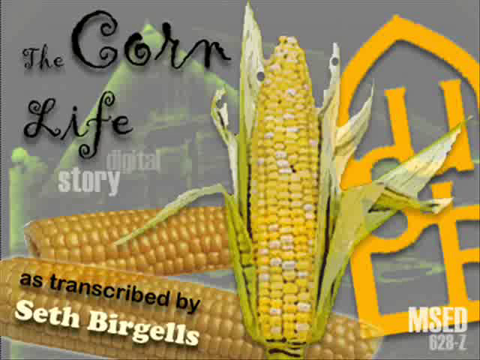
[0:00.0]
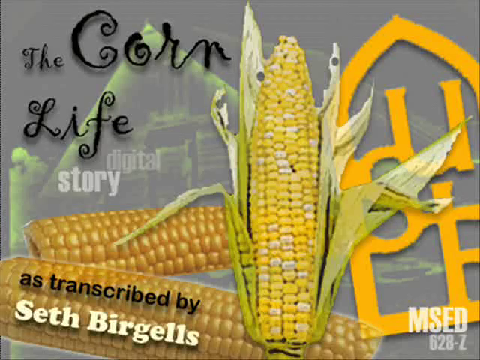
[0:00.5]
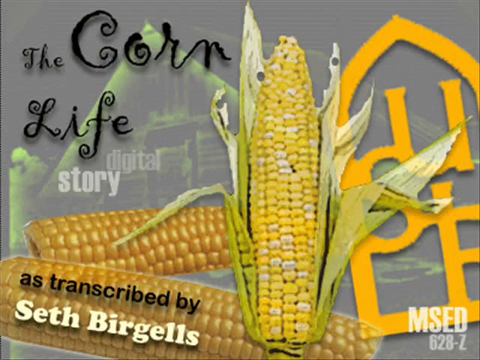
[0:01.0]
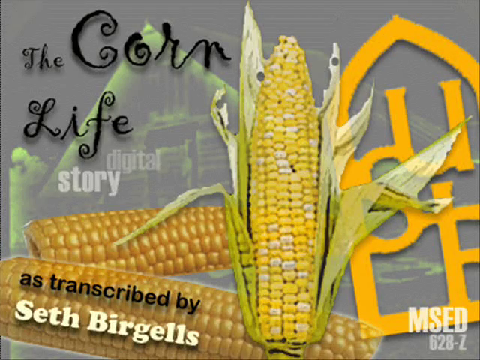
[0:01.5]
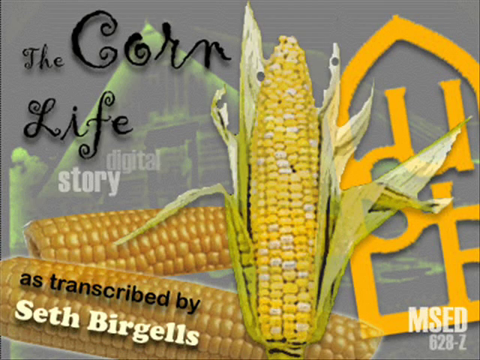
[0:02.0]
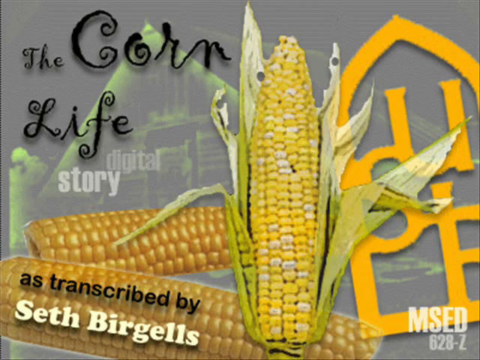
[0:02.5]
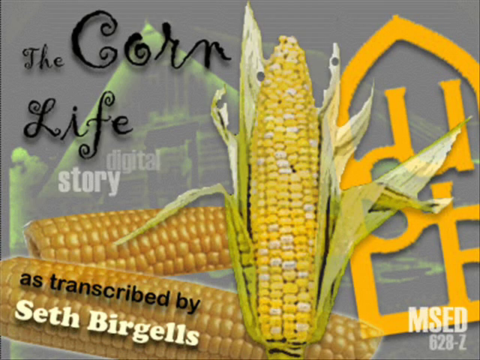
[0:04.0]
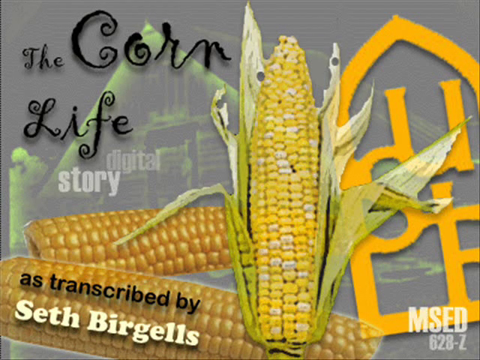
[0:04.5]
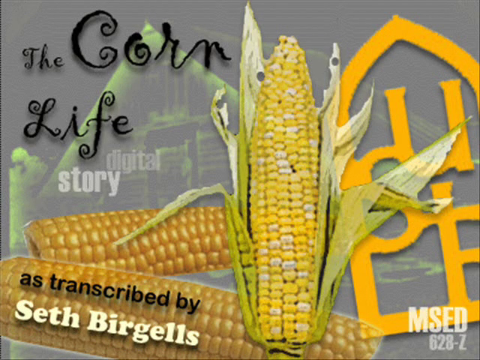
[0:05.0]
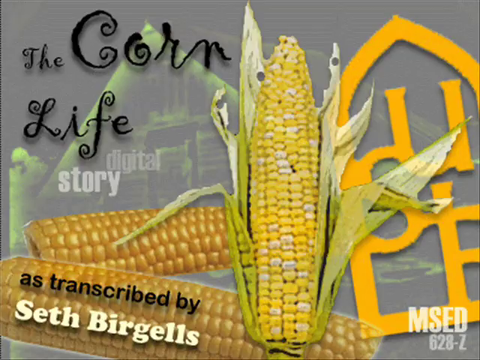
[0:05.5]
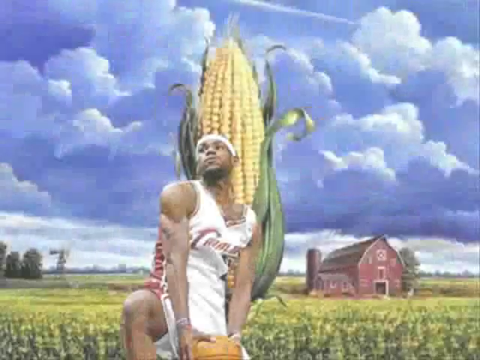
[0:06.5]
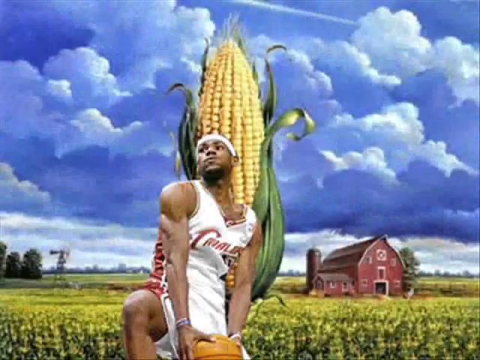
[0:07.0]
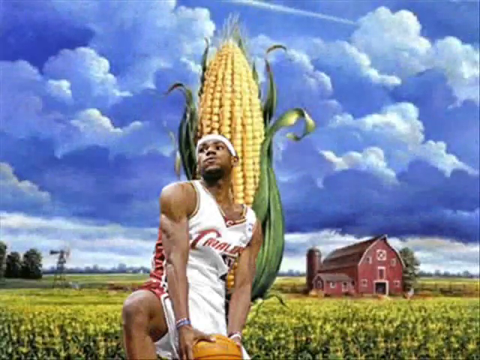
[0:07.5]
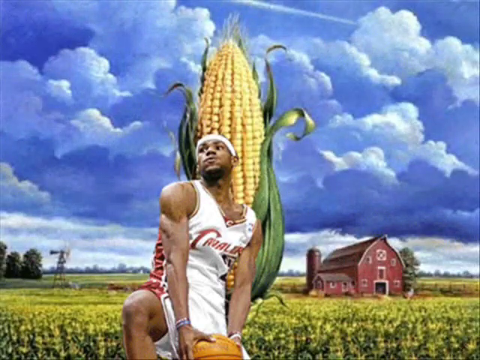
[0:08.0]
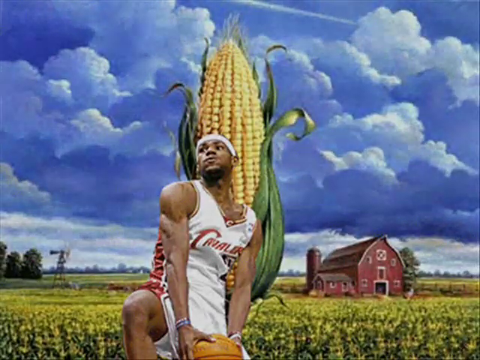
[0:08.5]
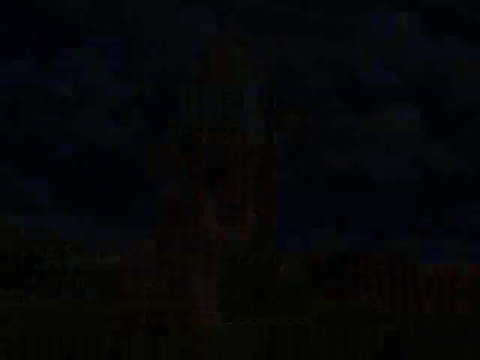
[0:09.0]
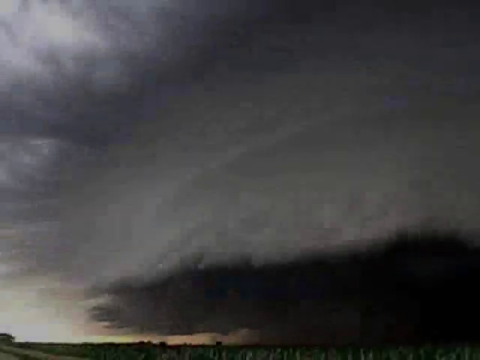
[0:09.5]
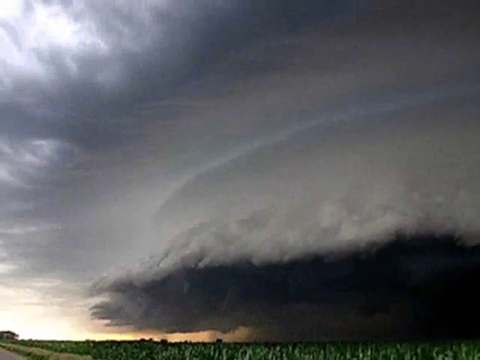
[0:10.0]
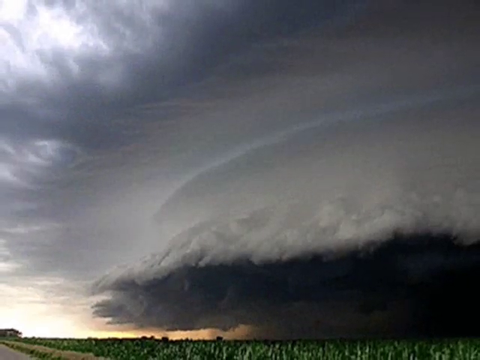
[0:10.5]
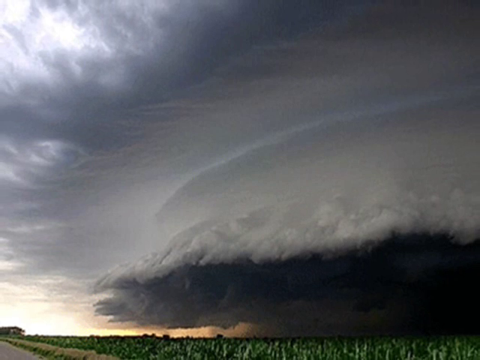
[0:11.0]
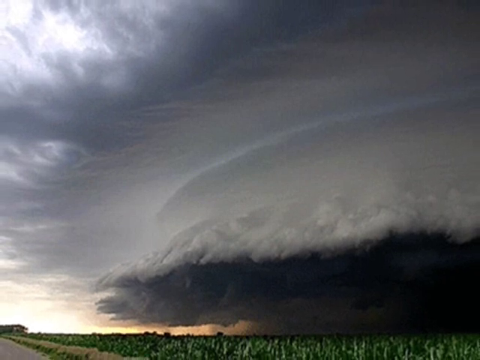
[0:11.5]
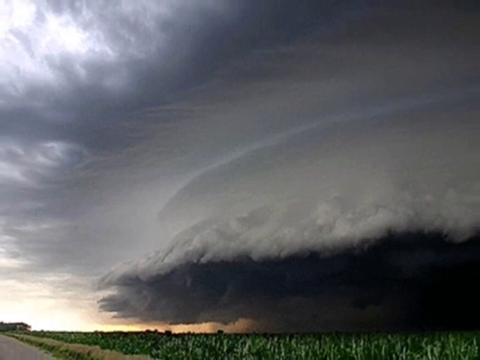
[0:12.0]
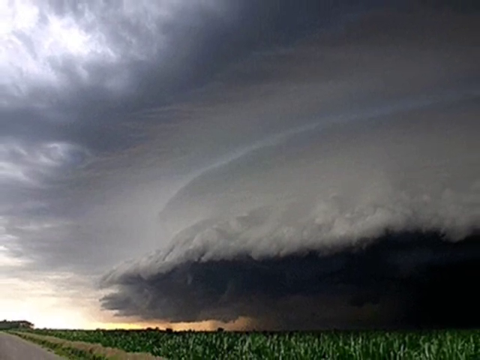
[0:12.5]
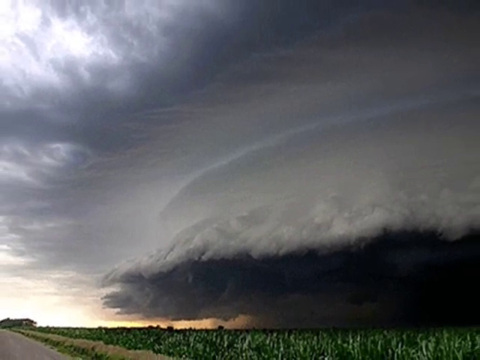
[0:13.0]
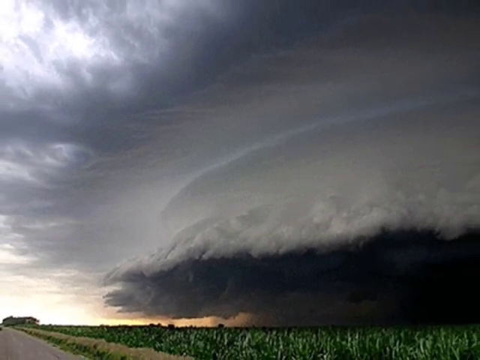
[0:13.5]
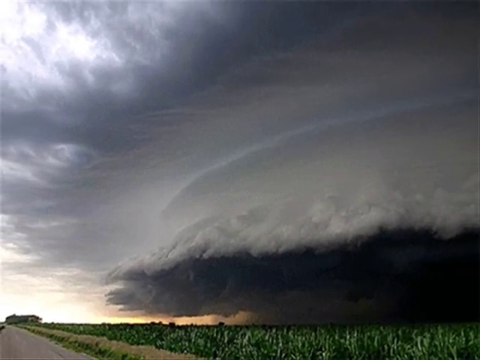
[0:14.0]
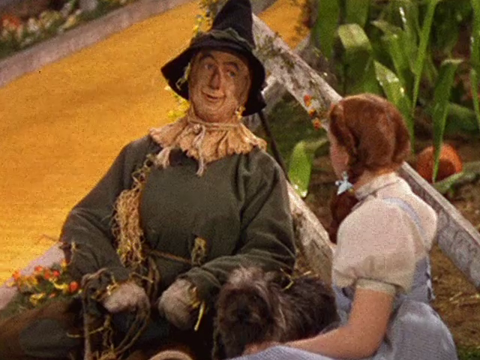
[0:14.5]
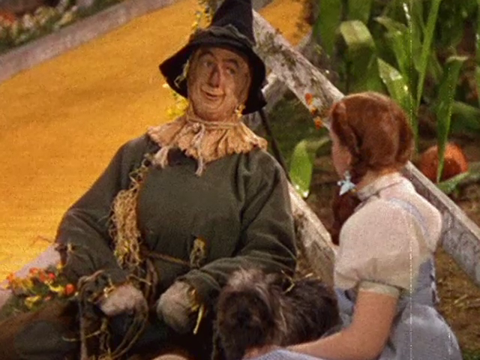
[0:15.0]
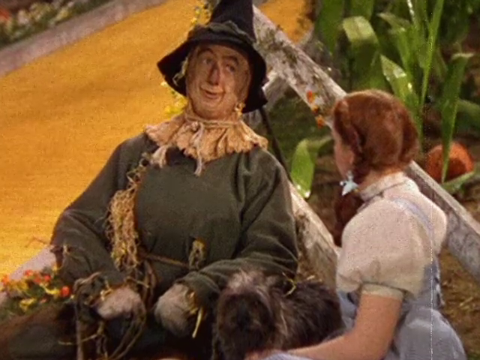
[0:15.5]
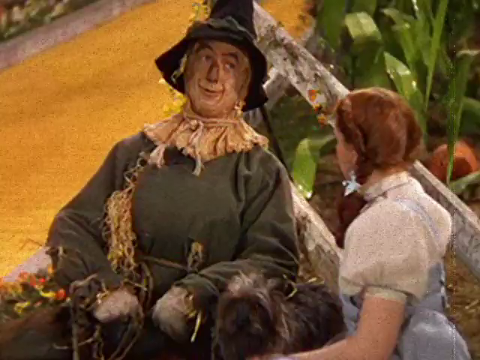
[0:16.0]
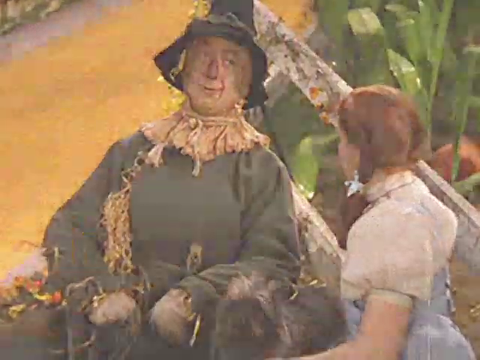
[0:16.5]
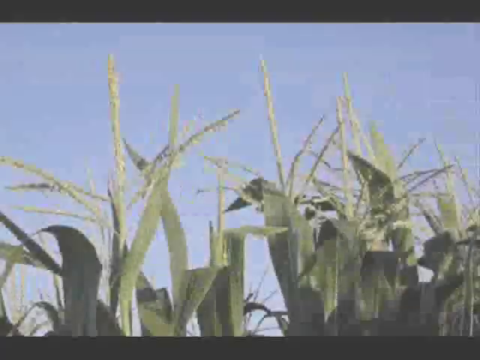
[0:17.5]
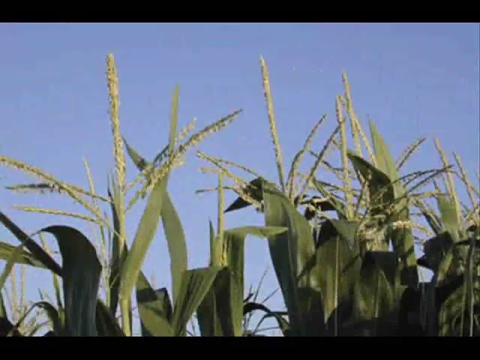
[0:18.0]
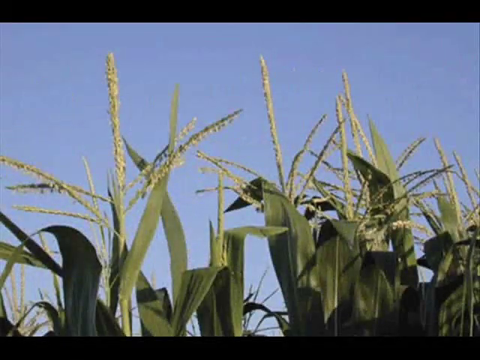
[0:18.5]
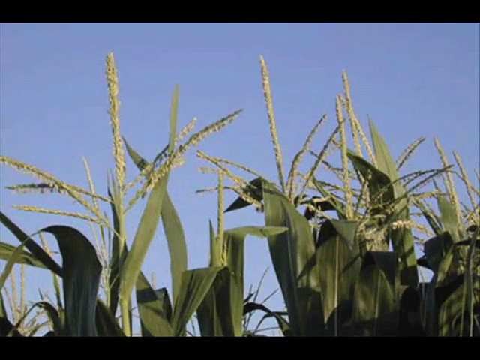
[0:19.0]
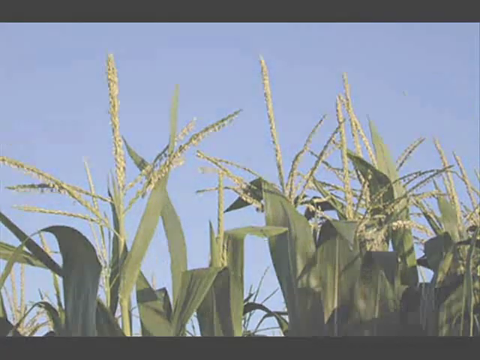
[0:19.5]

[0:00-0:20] The video opens with its title, the corn life digital story, as transcripted by Seth Burgels. The first picture looks like a young LeBron James, probably from his first time with the Cleveland Cavaliers. He appears to be photoshopped into a farm setting, with tall corn behind him, a barn in the background, and a lot of clouds in the sky. He is kind of posing, and his arms are muscular and ripped. The image transitions to a picture of a sky with clouds, and the view kind of zooms out from it. Next comes a picture of a man wearing a hat that looks like it could be a scene from The Wizard of Oz. Then some corn stalks are shown.